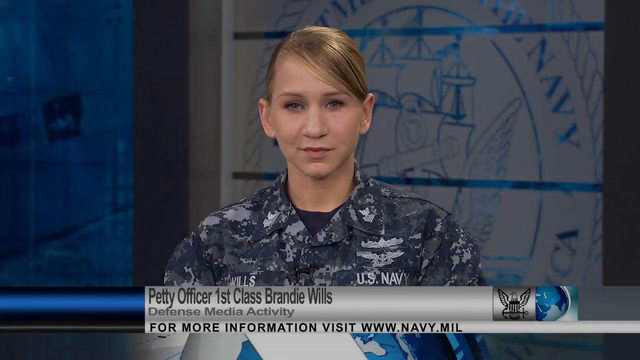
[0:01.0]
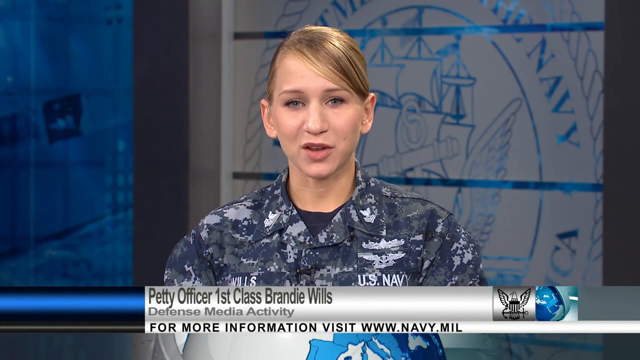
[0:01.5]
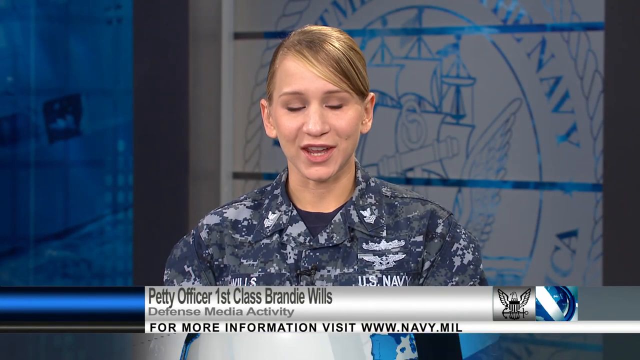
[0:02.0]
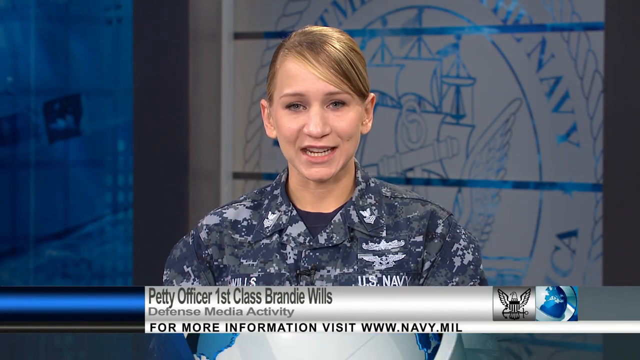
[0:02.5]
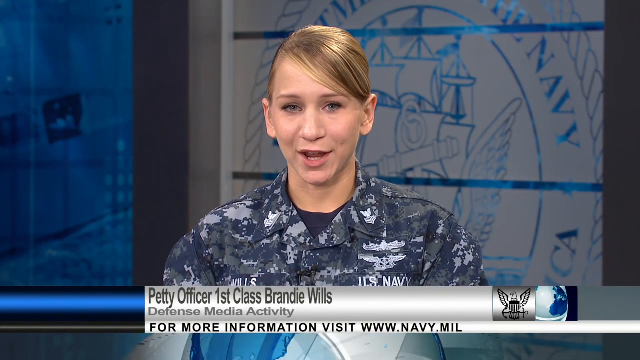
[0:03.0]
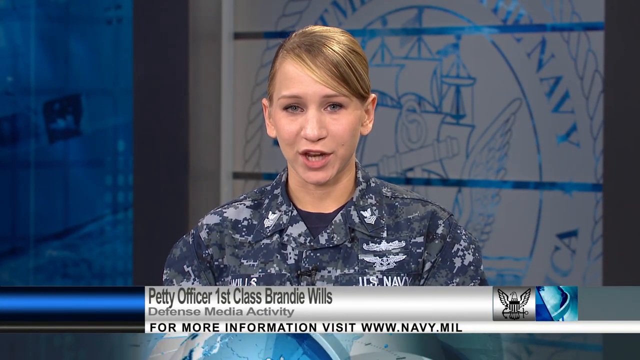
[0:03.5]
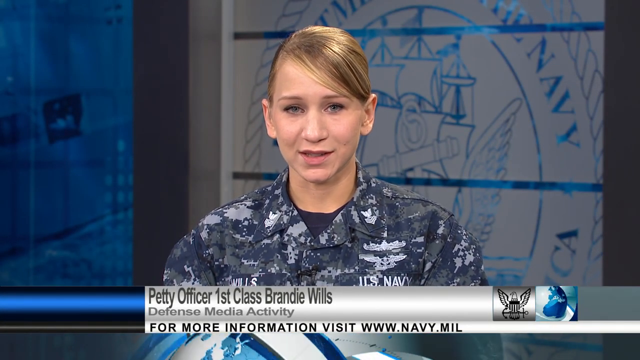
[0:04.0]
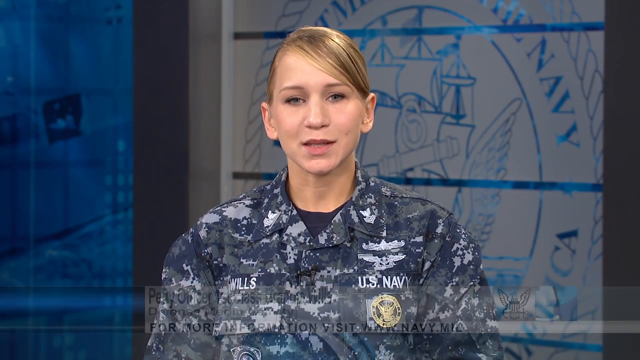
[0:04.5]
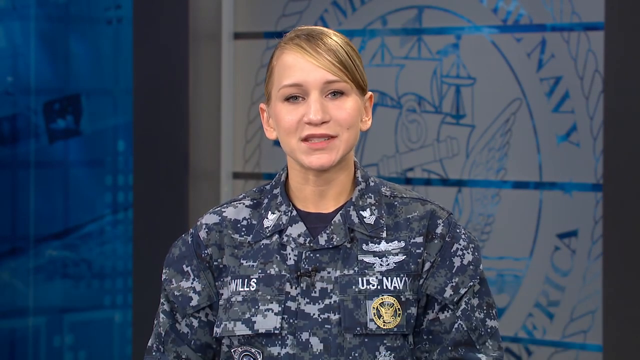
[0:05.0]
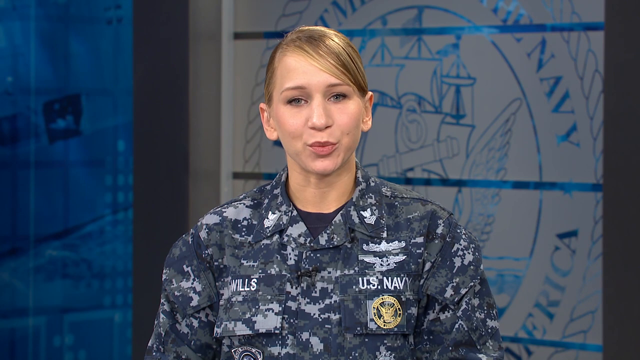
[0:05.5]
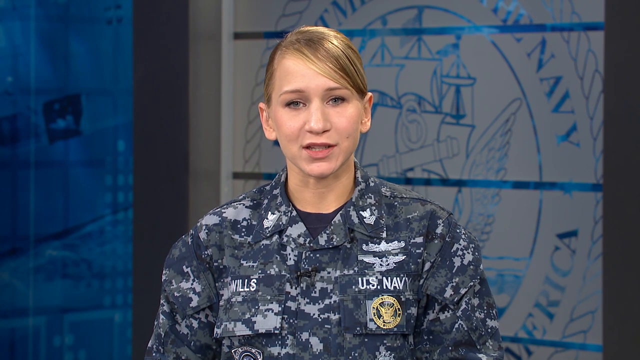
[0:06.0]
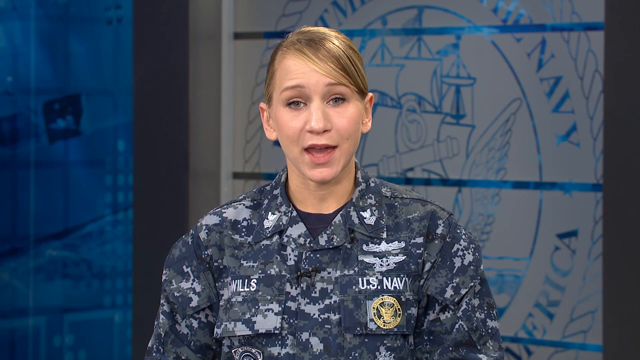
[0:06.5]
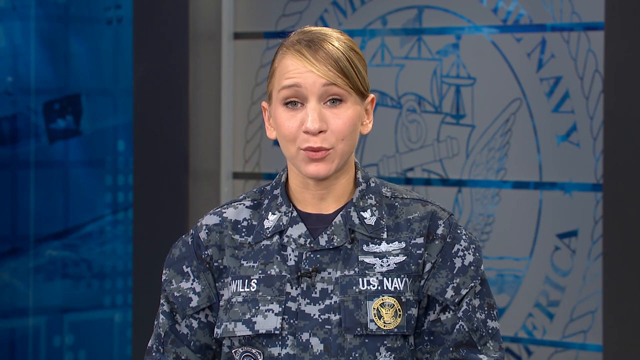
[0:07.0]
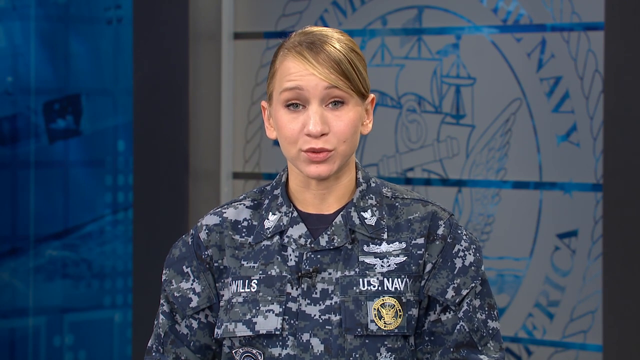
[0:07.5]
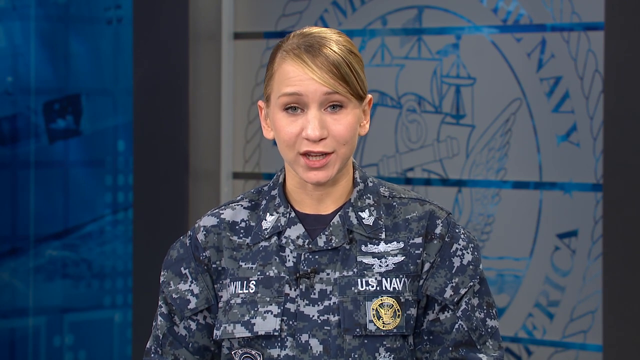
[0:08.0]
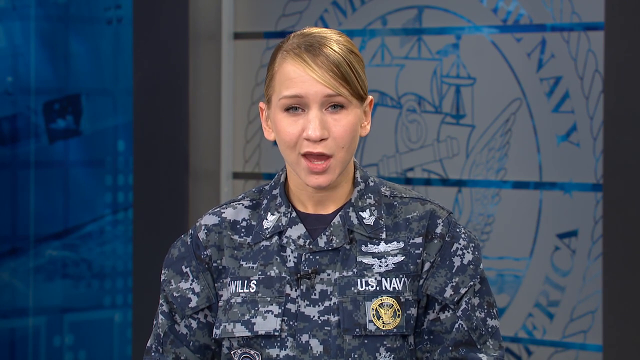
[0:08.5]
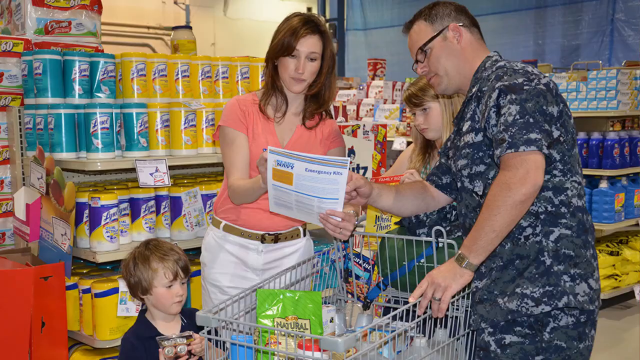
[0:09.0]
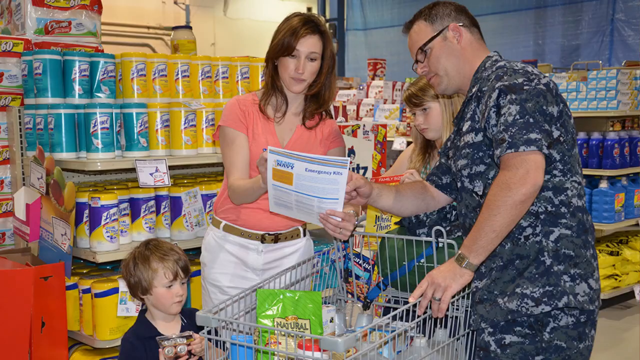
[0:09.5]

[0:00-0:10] The video fades from black to a newsroom, where a Caucasian woman in a blue shirt that appears to be a military outfit talks directly to the camera, smiling. She has blonde hair and wears a black undershirt. A gray banner with darker gray text appears at the bottom of the screen, reading "Petty Officer First Class Brandy Wills, Defense Media Activity." The scene then cuts to a grocery store, where four family members are looking at a shopping list.